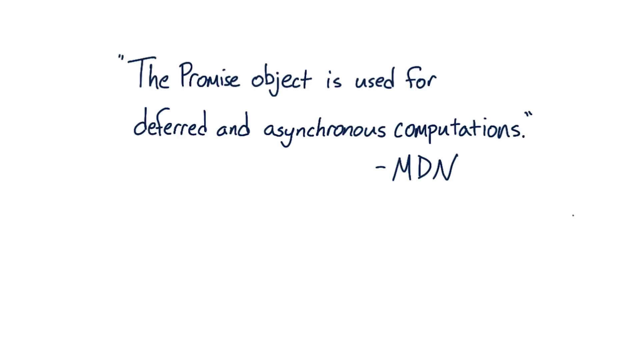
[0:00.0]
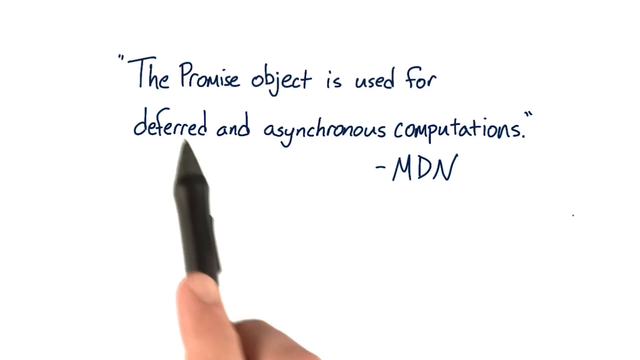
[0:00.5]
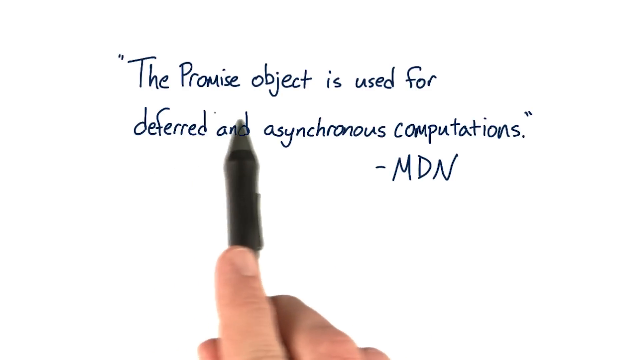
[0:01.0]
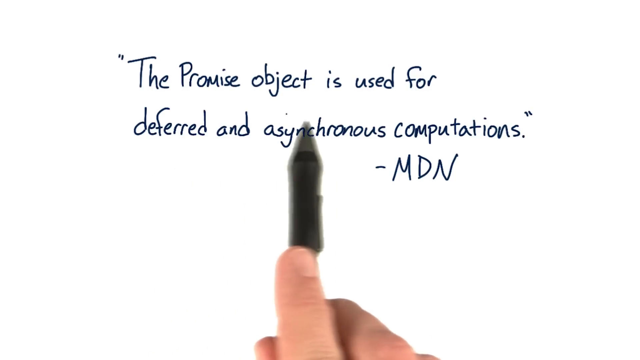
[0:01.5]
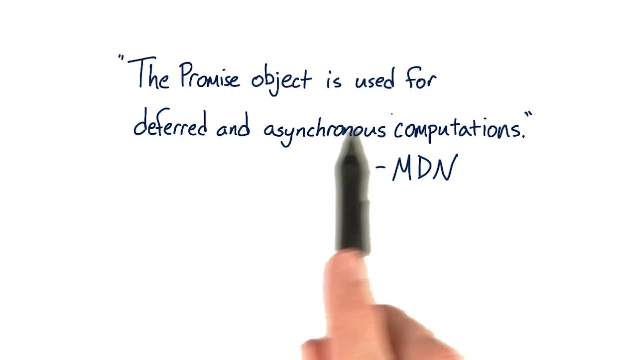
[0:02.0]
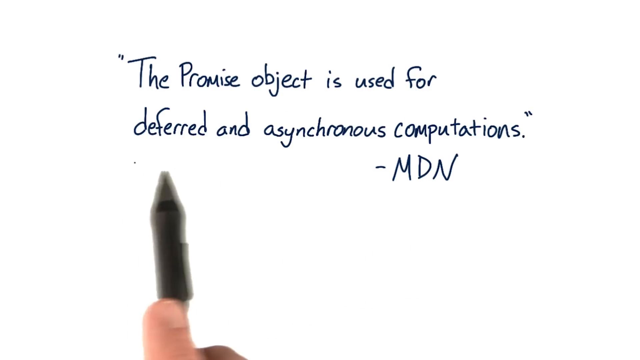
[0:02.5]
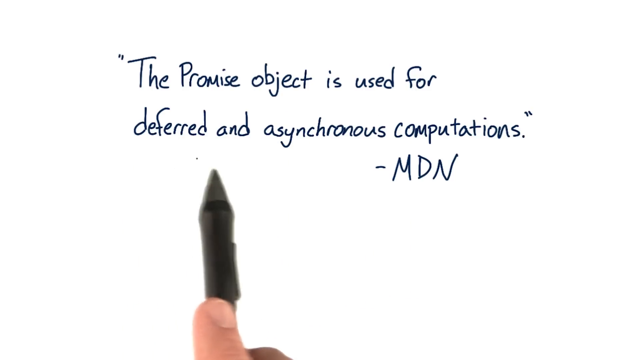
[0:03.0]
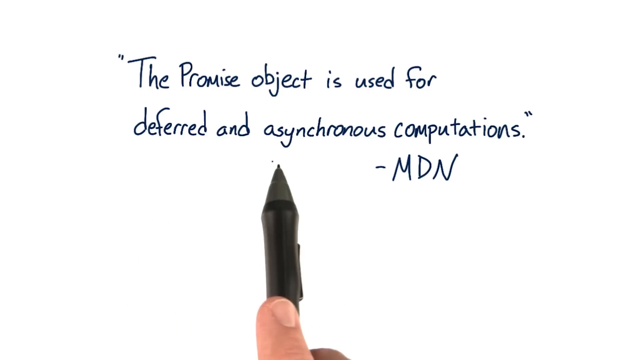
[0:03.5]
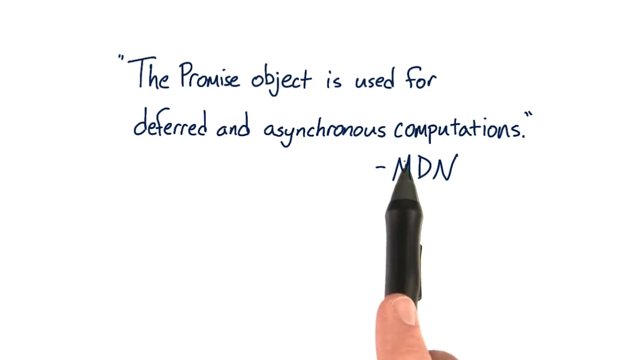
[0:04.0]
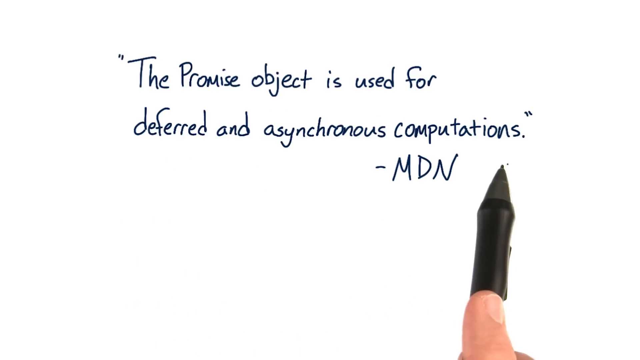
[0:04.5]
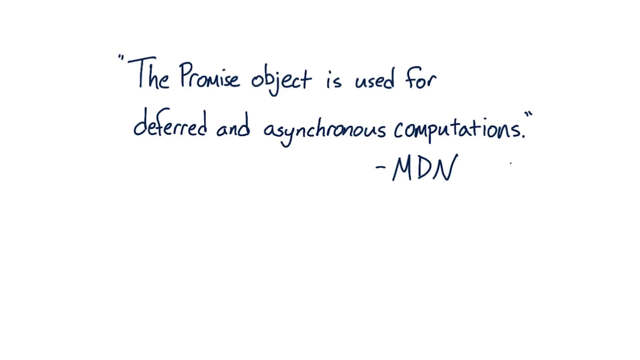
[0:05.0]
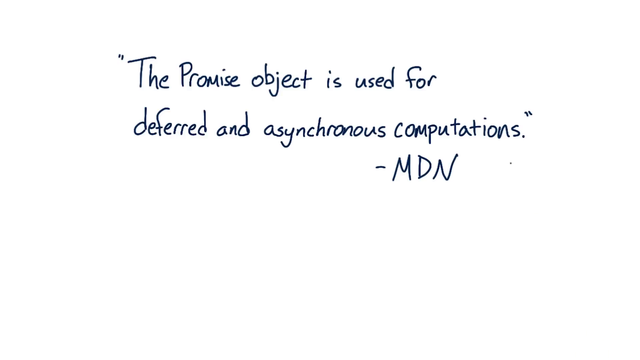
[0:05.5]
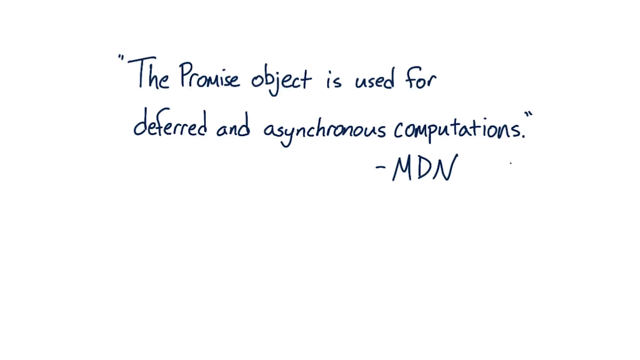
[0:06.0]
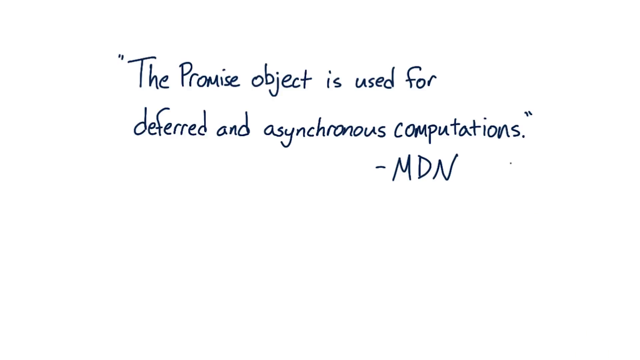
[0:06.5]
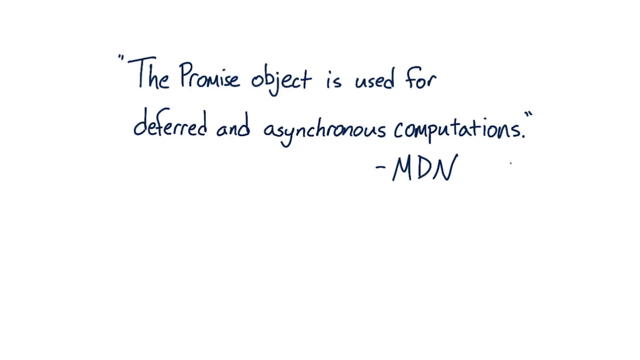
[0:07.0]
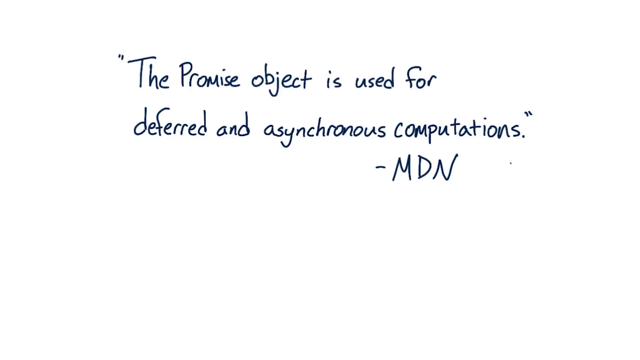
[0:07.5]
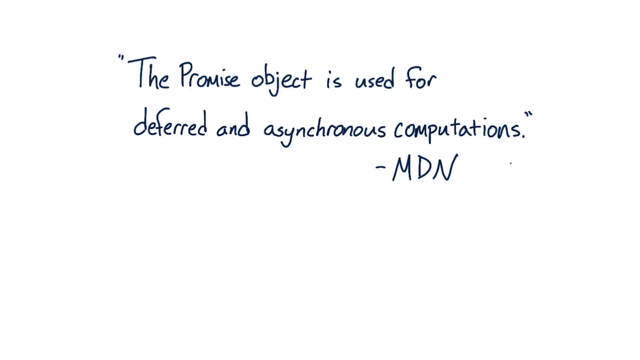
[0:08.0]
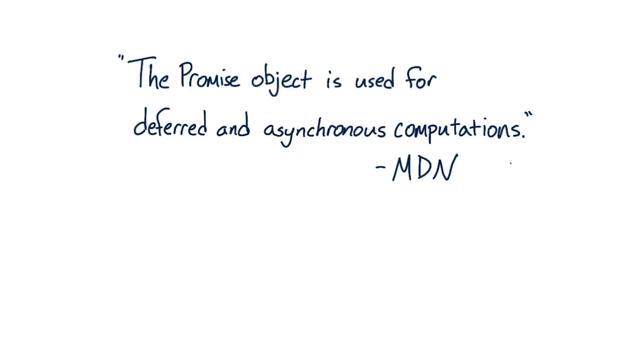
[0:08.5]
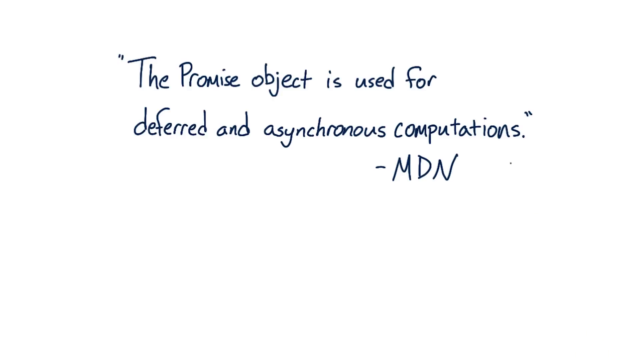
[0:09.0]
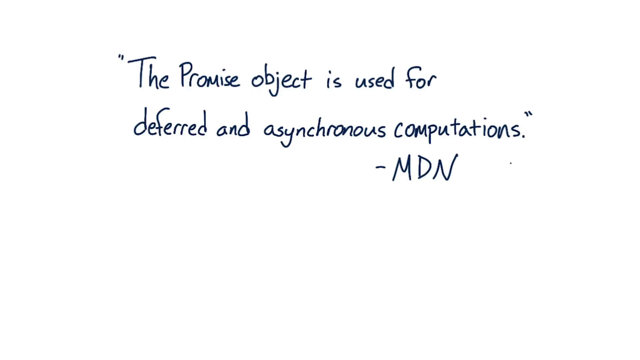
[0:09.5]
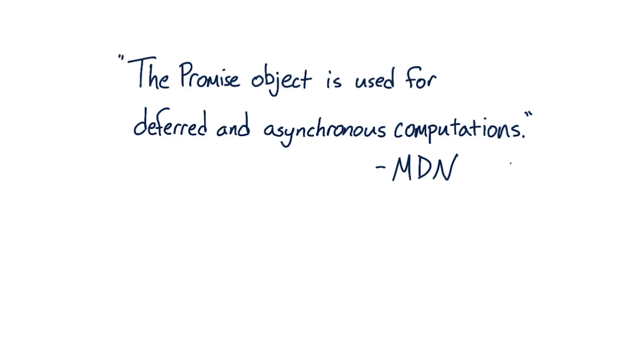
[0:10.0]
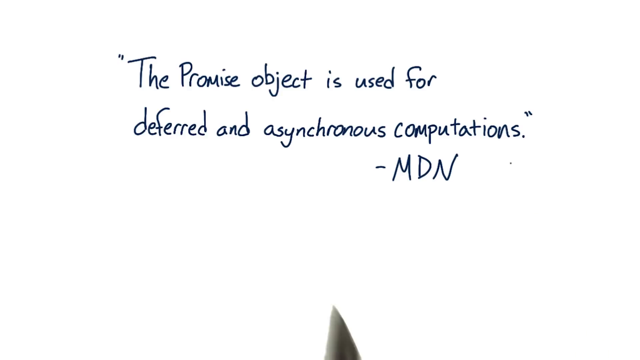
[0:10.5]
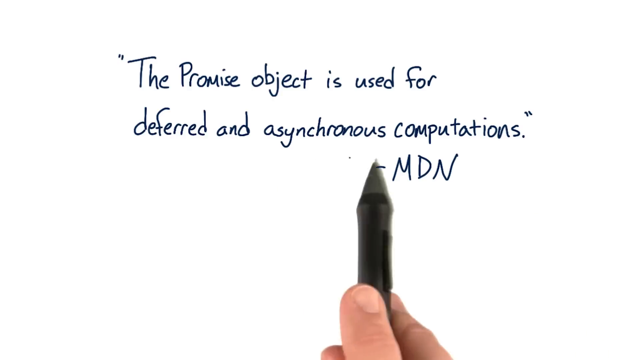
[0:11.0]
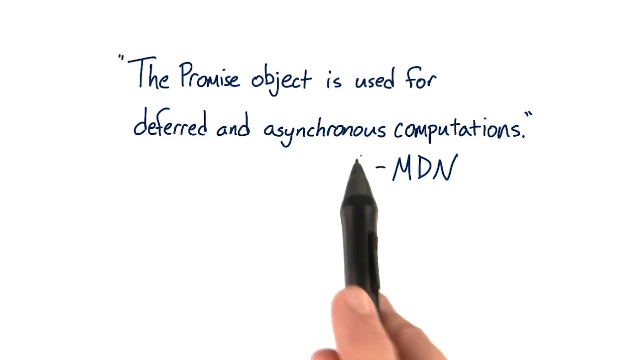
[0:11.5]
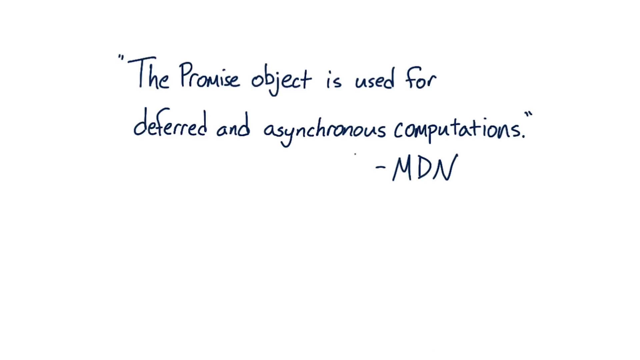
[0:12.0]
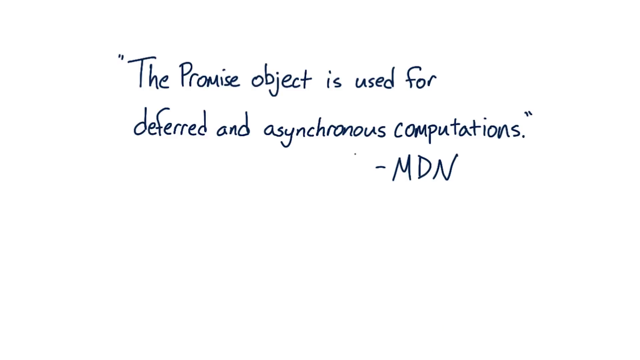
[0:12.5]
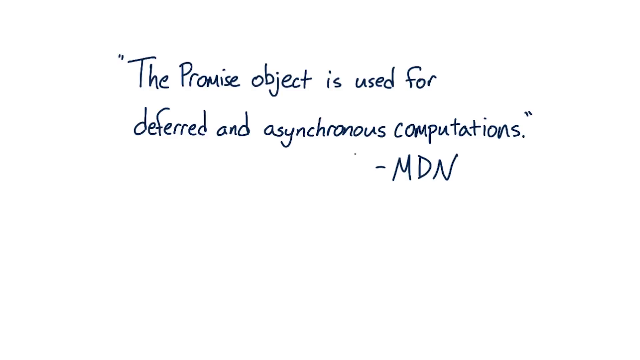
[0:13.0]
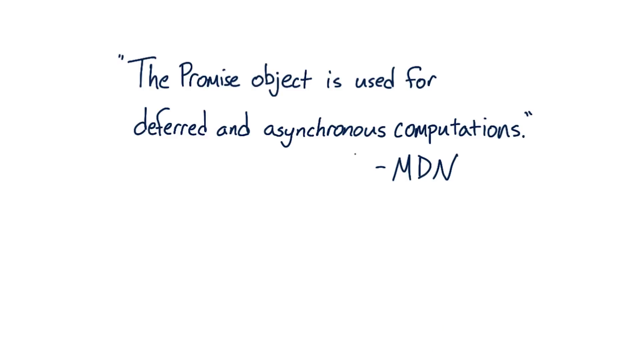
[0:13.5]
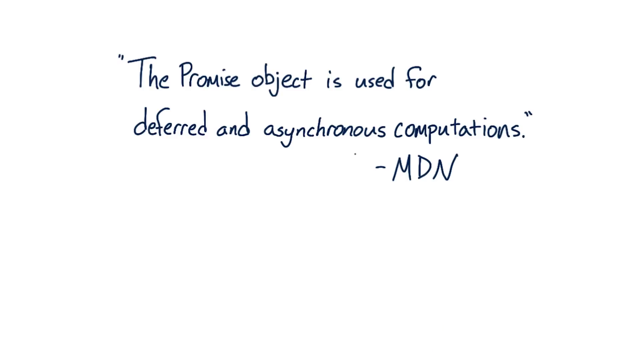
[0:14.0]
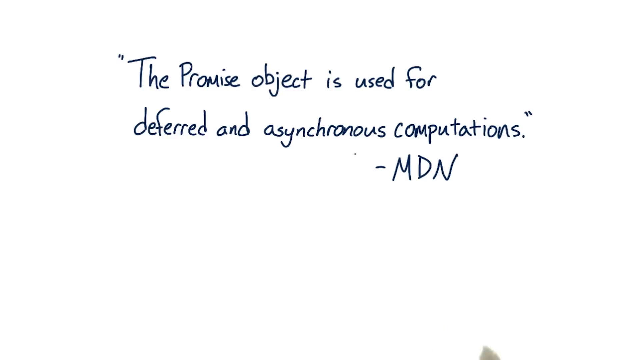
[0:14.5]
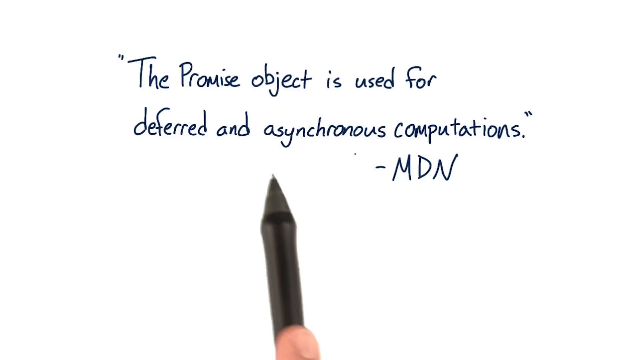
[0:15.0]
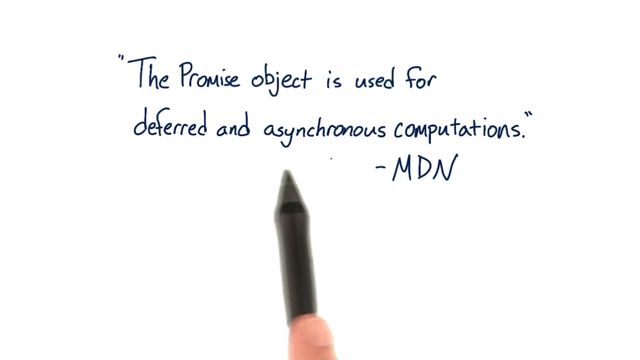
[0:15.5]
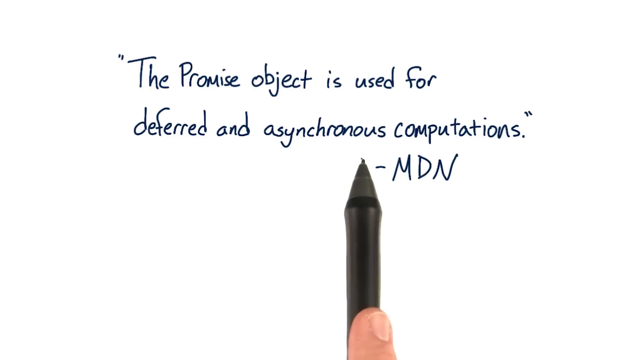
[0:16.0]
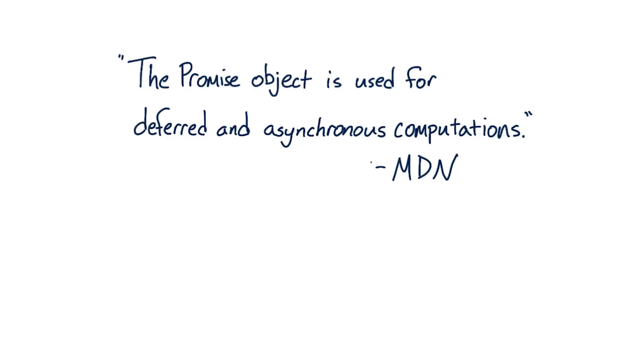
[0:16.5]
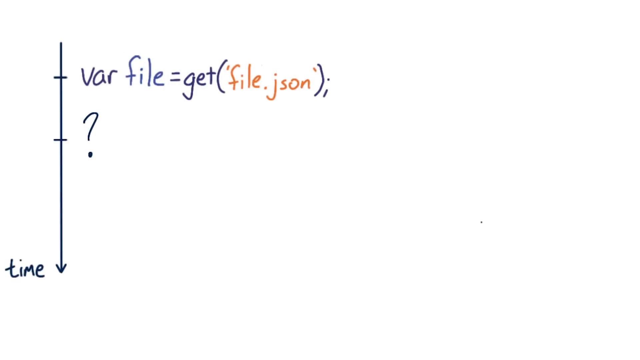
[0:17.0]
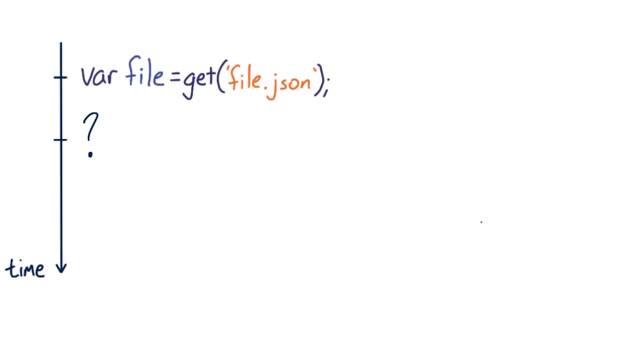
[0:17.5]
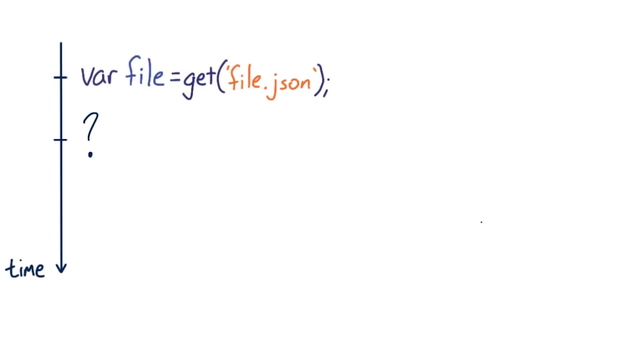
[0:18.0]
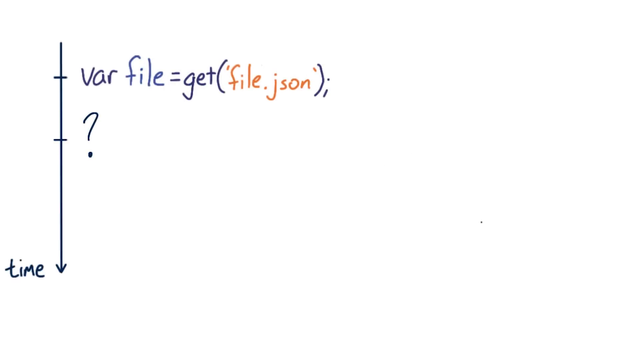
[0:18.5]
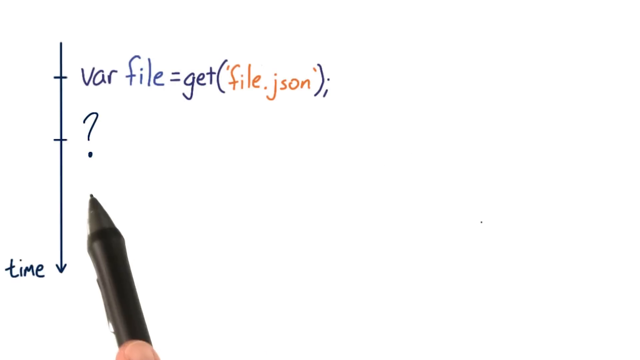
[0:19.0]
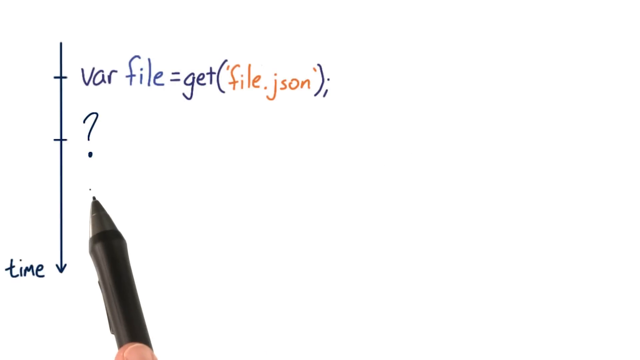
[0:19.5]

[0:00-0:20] The video opens on a white screen with writing on it that looks like handwriting. It reads, in quotes, "the promise object is used for deferred and asynchronous computations," attributed to MDN. Someone holding a stylus or pen points at the written quote, and the shot stays on it for a long while, the pen still pointing. The view then switches to what appear to be lines of code. A vertical arrow pointing down is drawn with a couple of notches on it. Next to one notch it says "var file = get(file.json);", and at the next notch there is a question mark.